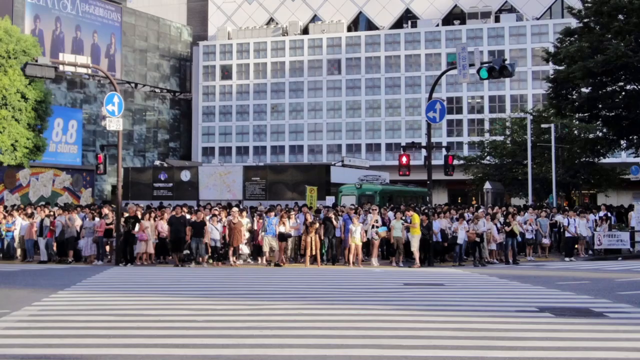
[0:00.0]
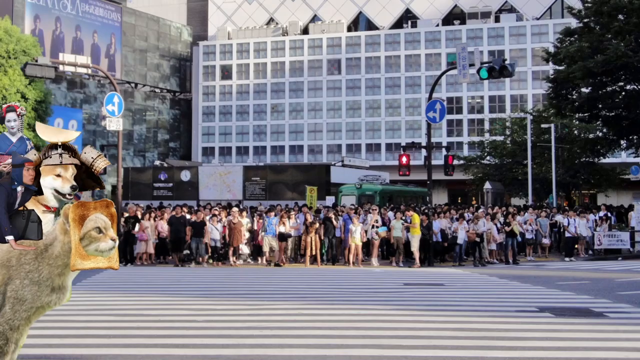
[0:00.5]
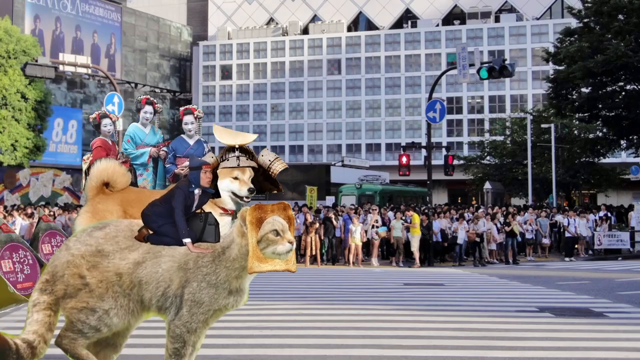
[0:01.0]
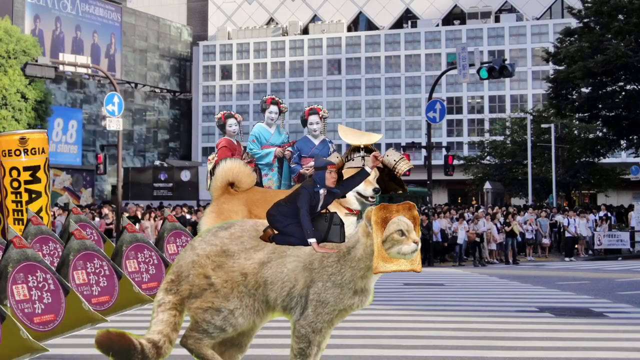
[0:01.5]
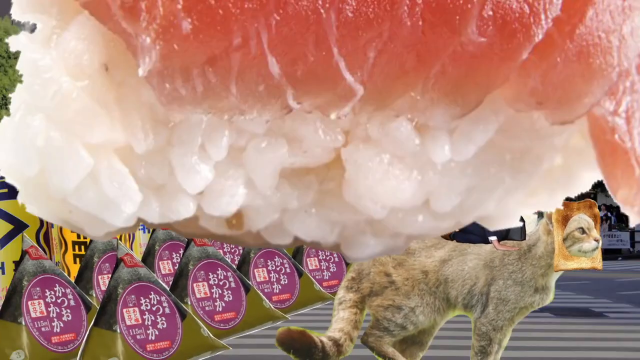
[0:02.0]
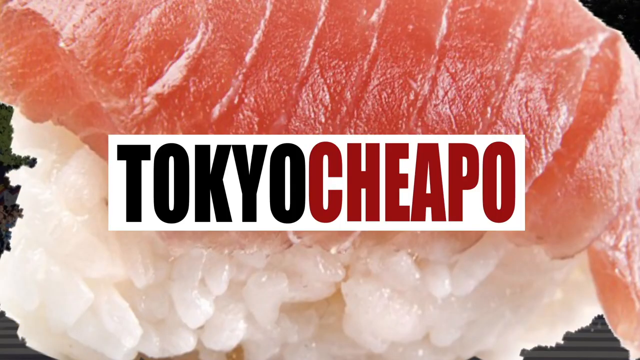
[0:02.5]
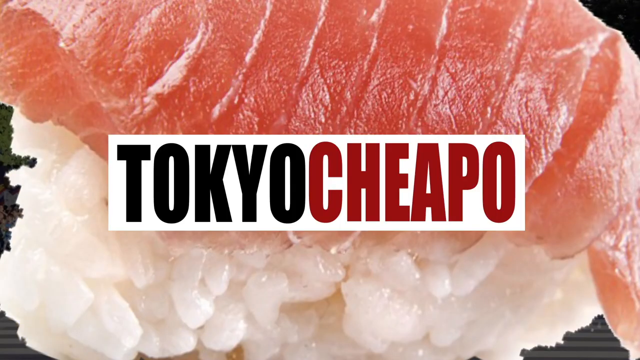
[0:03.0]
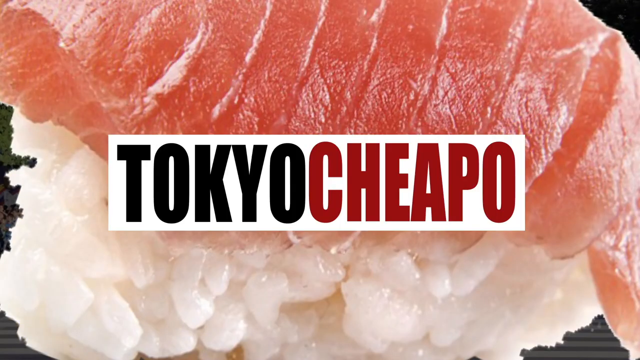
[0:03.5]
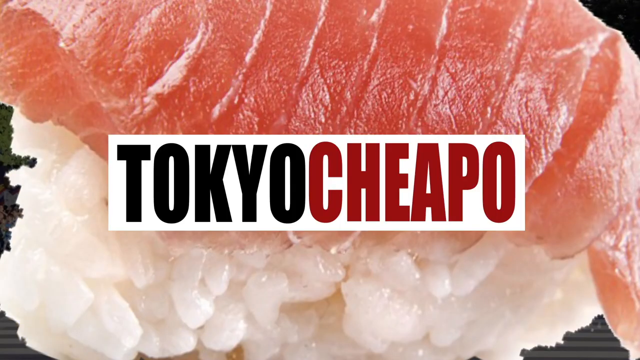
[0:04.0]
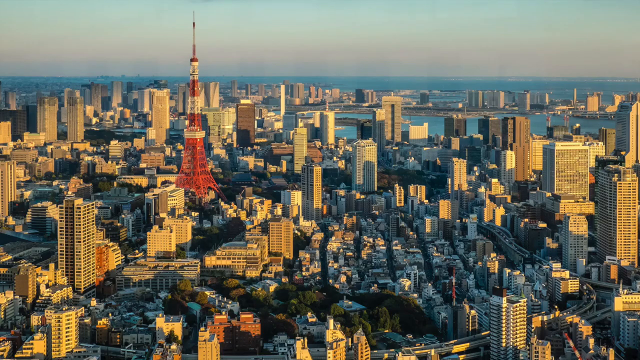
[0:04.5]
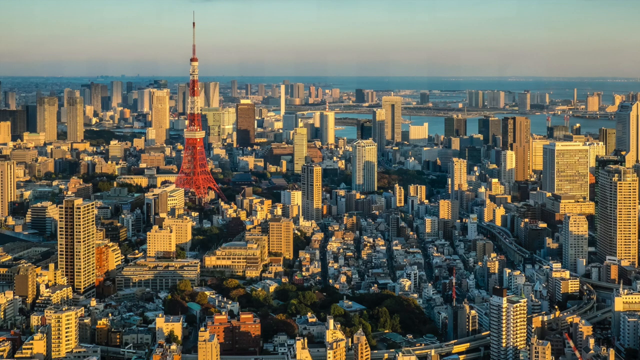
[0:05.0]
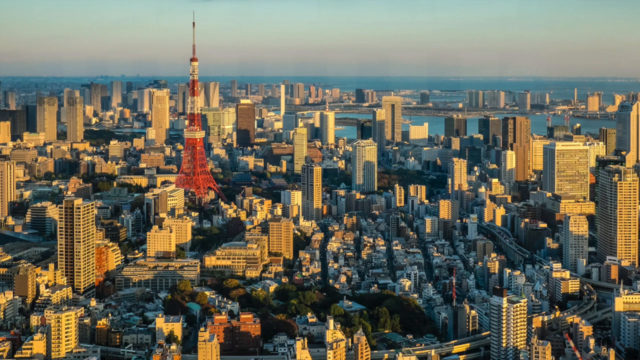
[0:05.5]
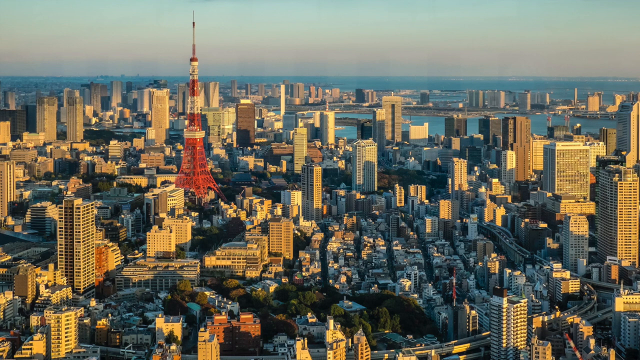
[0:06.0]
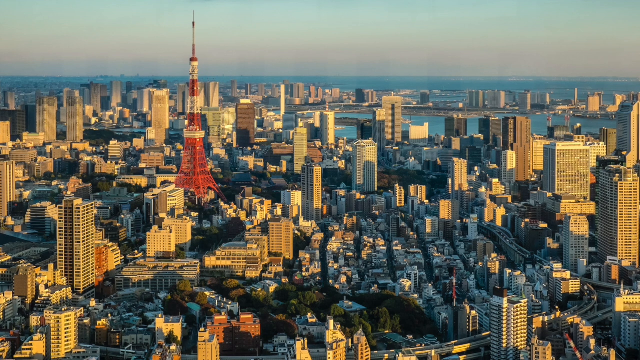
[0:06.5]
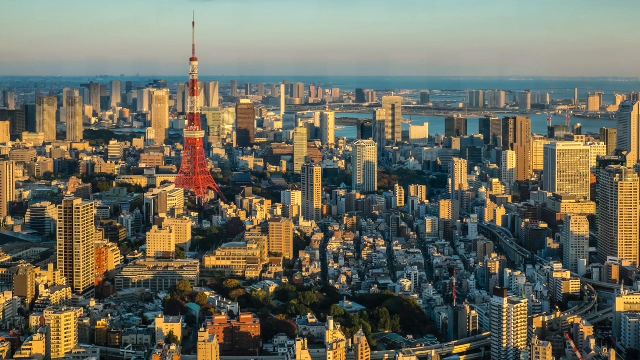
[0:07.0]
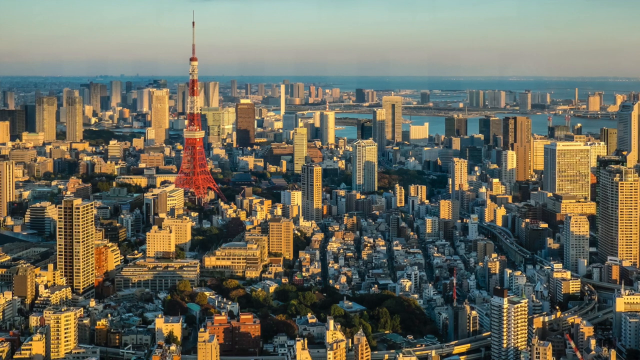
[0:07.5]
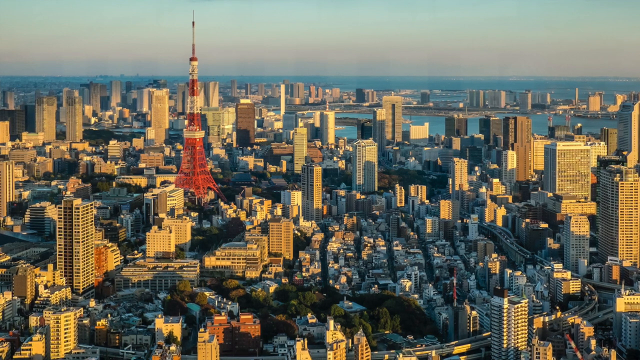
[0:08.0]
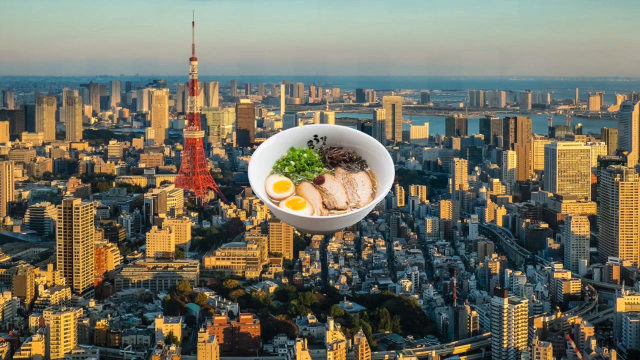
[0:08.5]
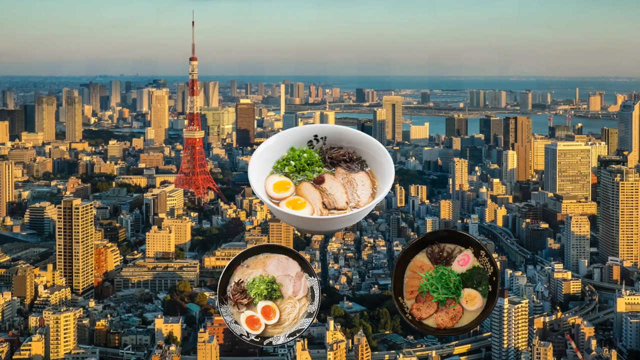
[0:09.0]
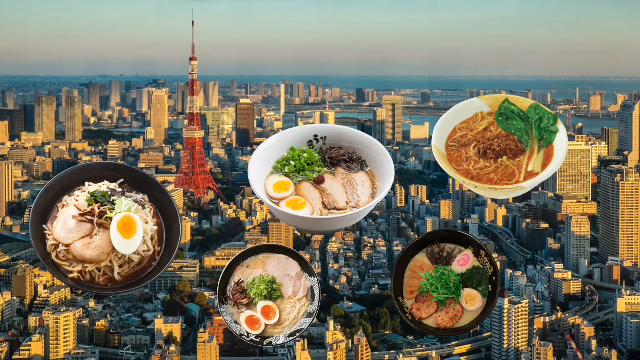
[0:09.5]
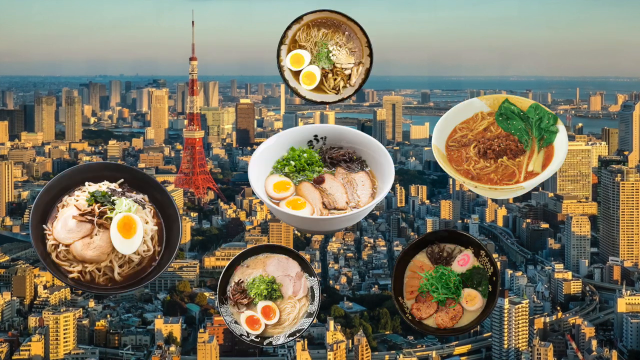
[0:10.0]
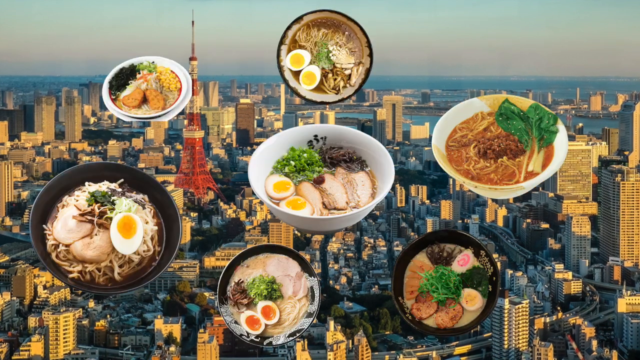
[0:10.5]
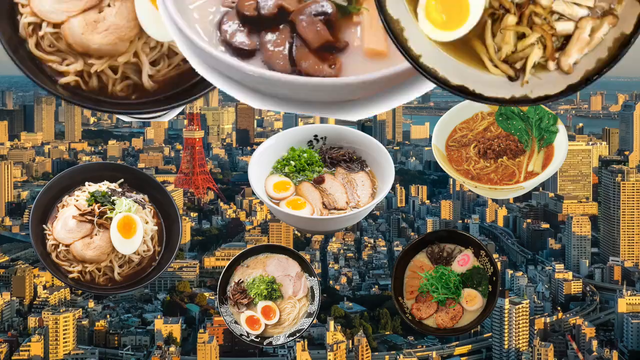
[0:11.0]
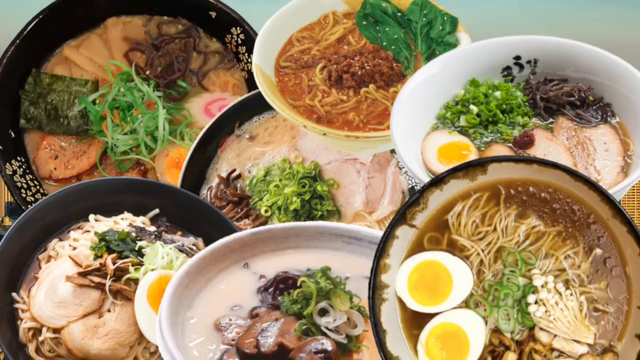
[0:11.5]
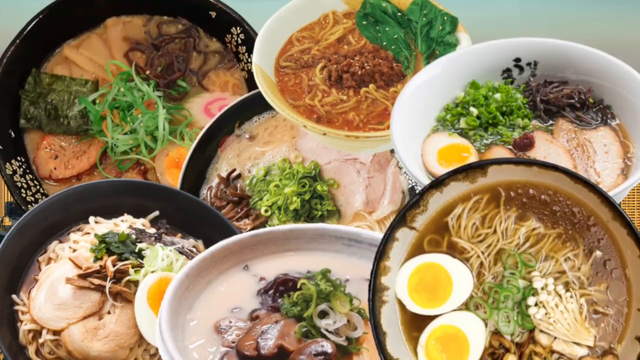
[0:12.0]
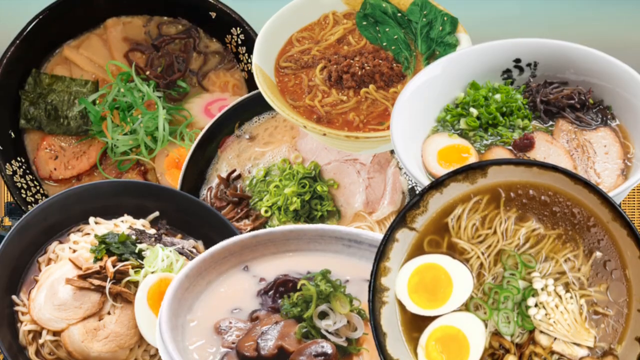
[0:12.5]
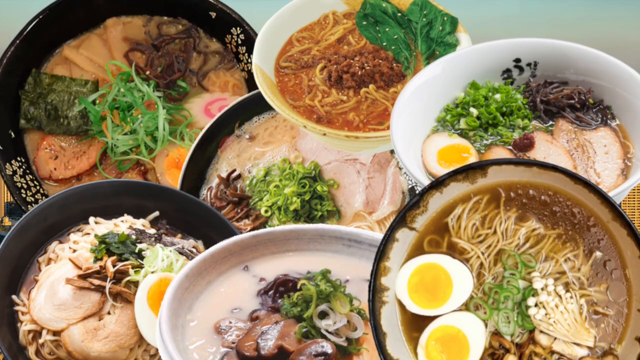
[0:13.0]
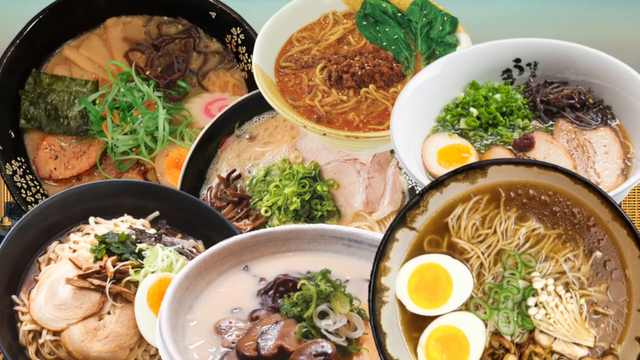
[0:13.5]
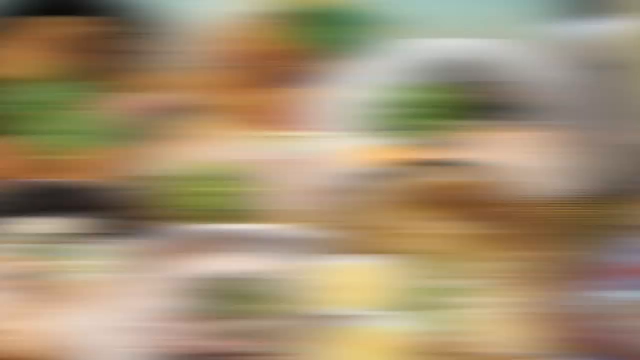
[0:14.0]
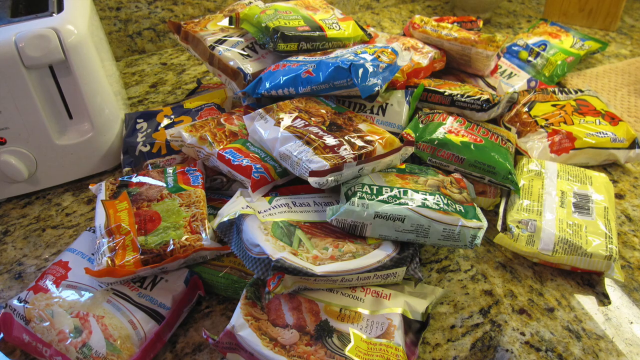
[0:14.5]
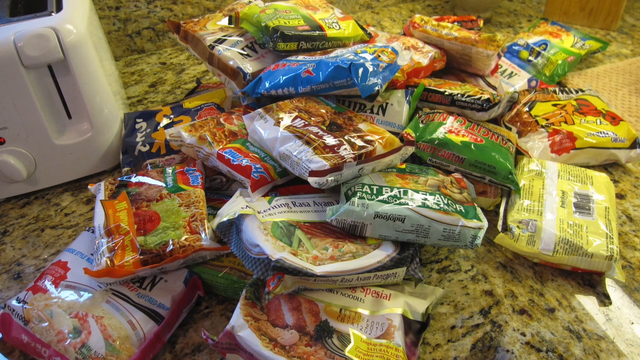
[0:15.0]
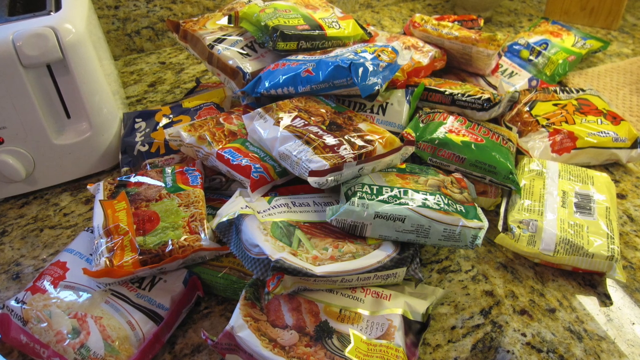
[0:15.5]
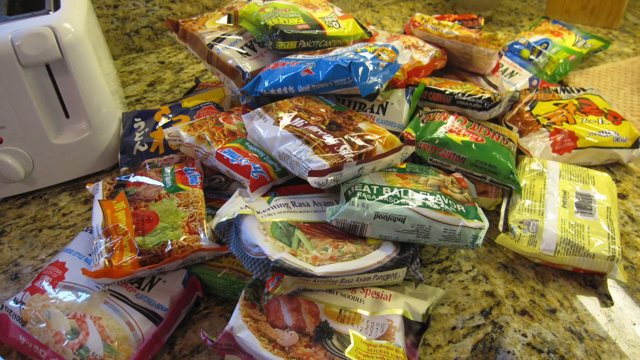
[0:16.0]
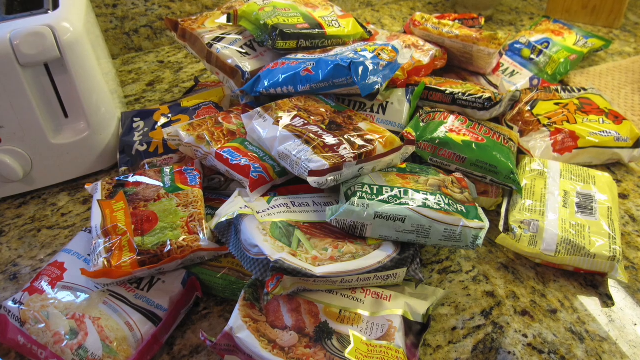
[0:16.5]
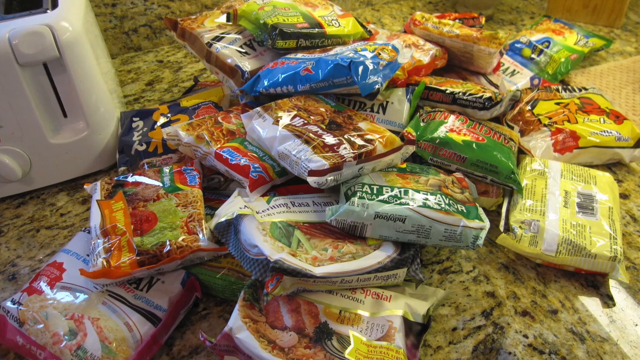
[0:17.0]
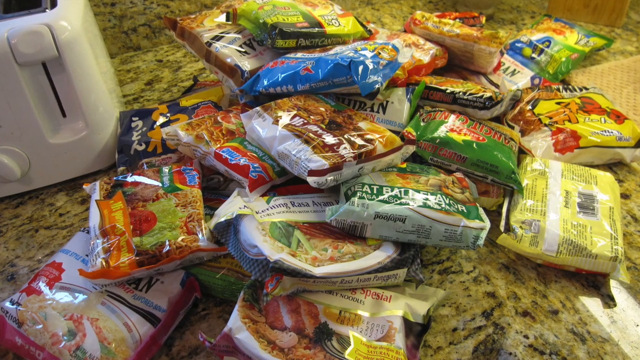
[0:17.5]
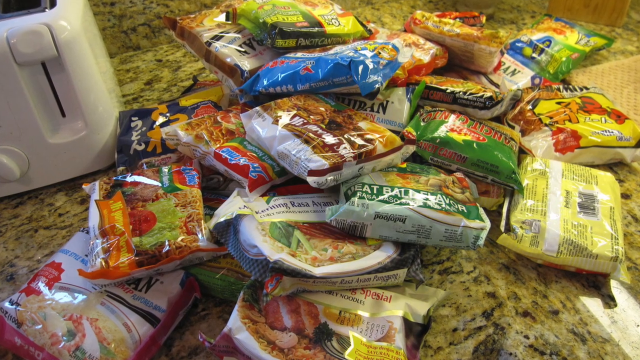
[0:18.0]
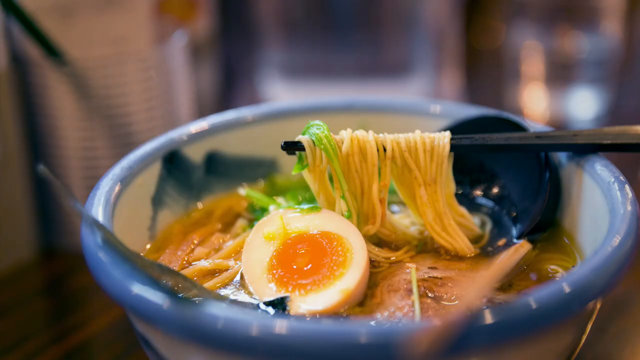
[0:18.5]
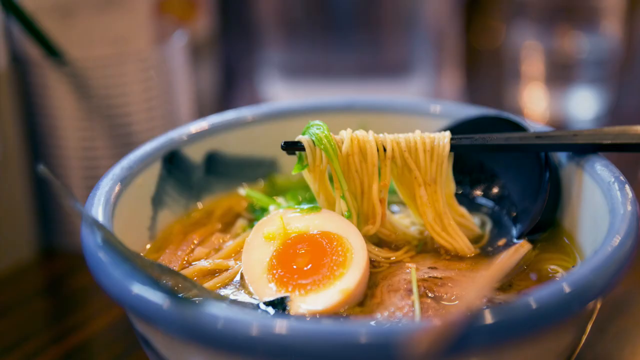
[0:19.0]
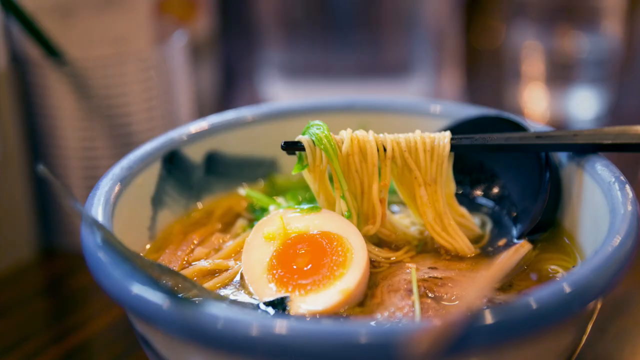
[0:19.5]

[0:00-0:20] A big crowd of people is on a huge sidewalk, with trees around and a green traffic light in the top left. What looks like an intro follows: a parade comes through the sidewalk, and the intro reads "Tokyo cheapo." The intro shows a big piece of salmon sushi with text that reads "Tokyo," and there are lots of bowls of ramen. The video switches to an image of piles of packaged ramen in plastic packaging on a kitchen counter, then to an image of a bowl of ramen containing noodles, eggs, spring onions and meat, with chopsticks.